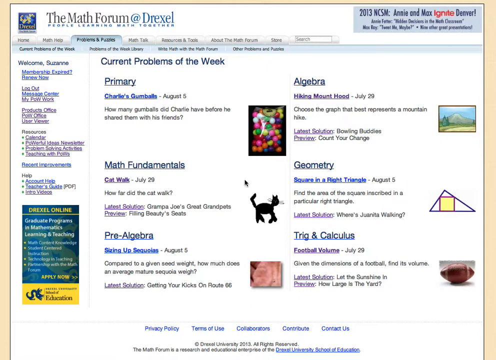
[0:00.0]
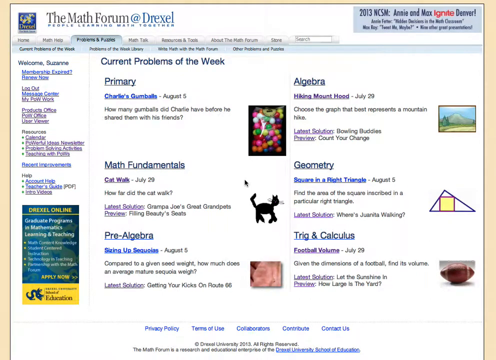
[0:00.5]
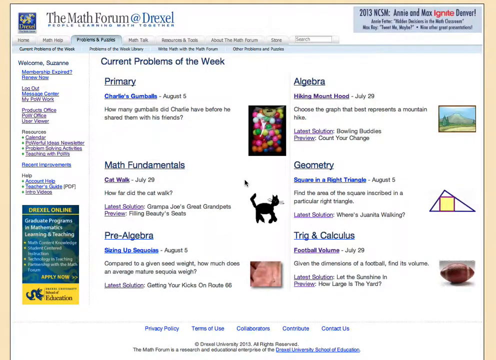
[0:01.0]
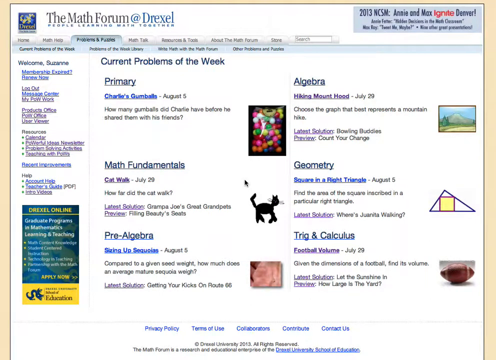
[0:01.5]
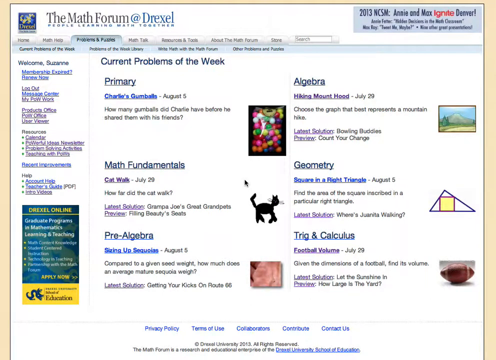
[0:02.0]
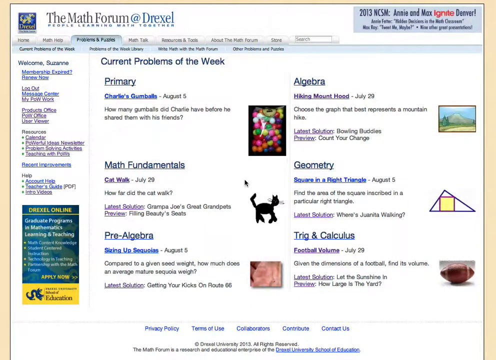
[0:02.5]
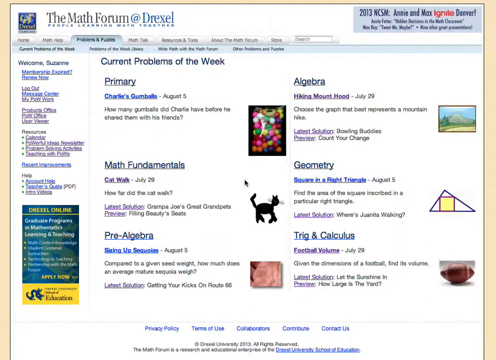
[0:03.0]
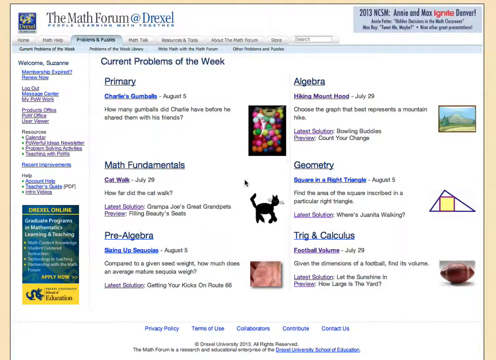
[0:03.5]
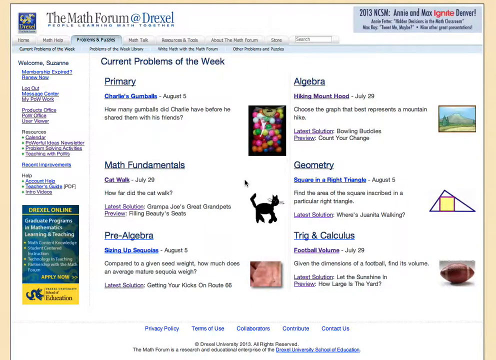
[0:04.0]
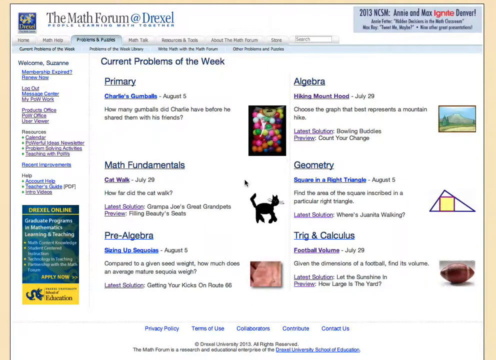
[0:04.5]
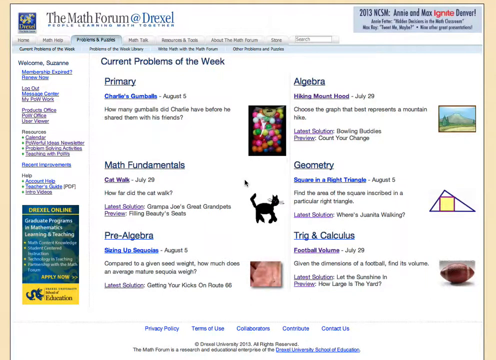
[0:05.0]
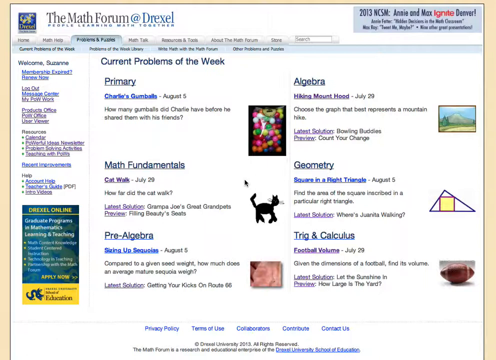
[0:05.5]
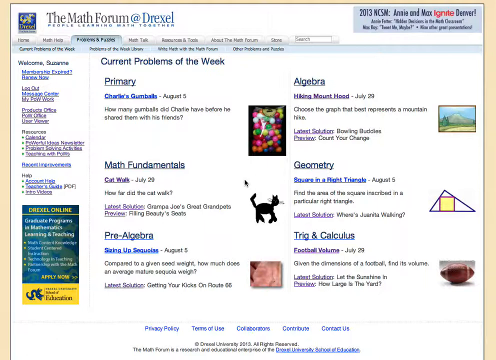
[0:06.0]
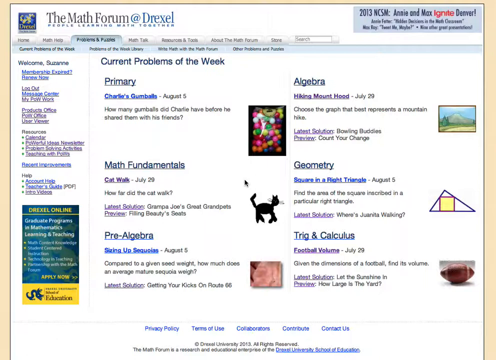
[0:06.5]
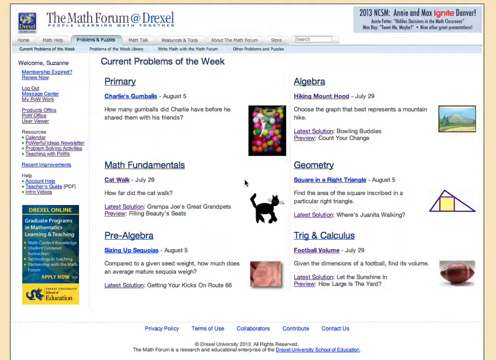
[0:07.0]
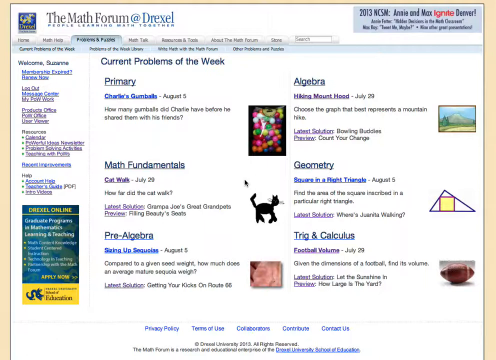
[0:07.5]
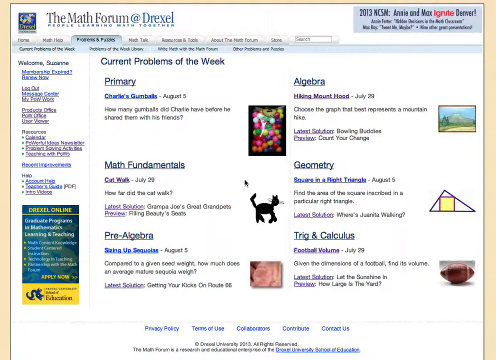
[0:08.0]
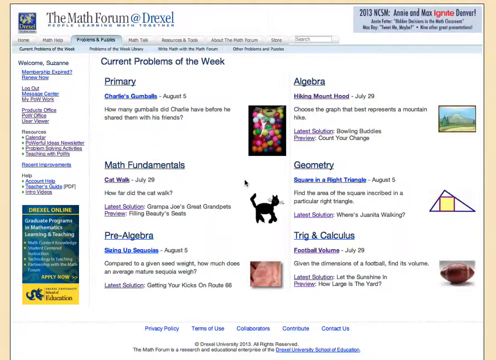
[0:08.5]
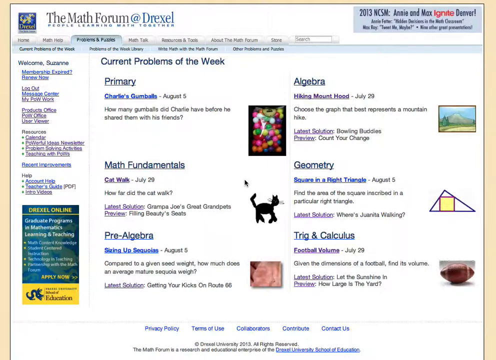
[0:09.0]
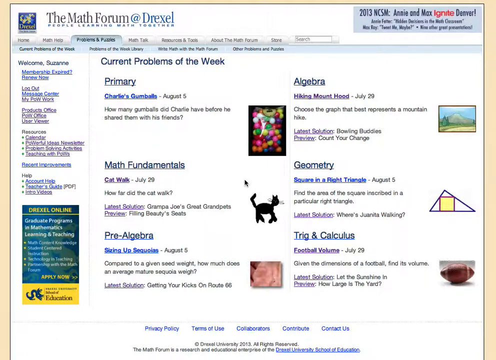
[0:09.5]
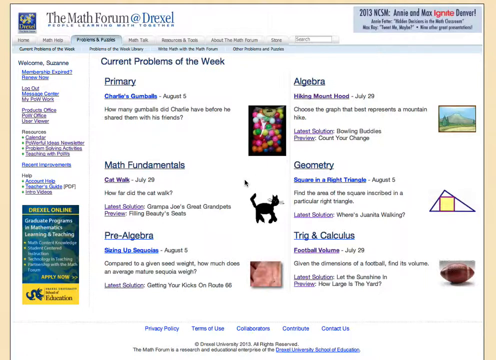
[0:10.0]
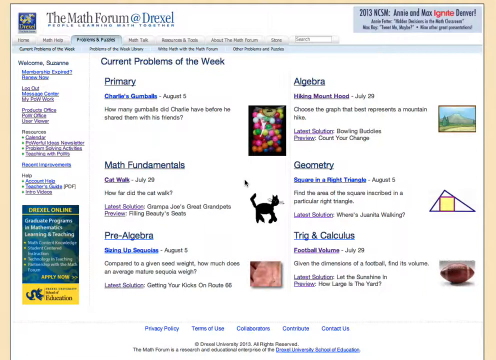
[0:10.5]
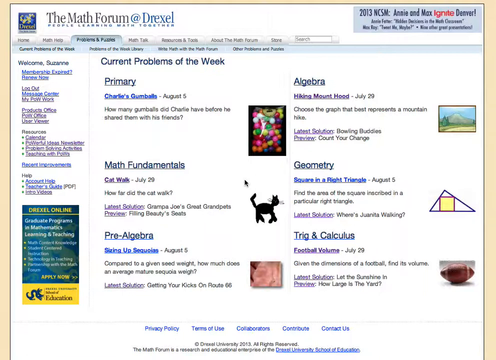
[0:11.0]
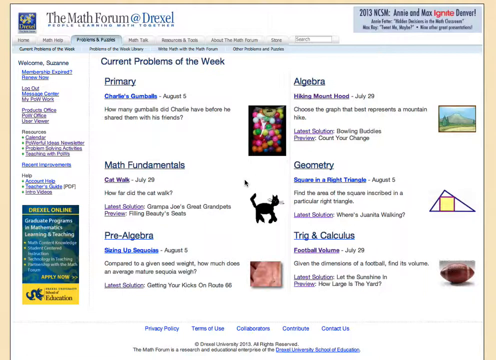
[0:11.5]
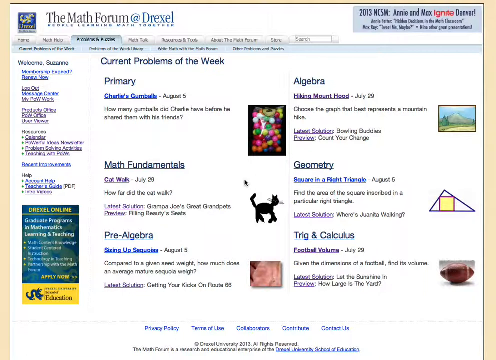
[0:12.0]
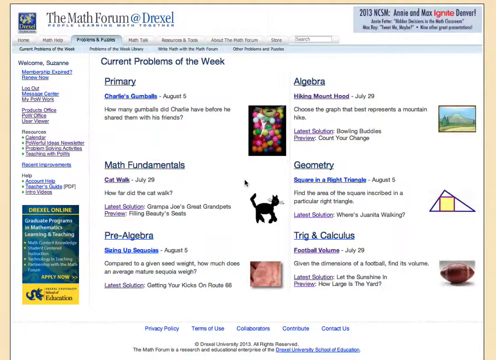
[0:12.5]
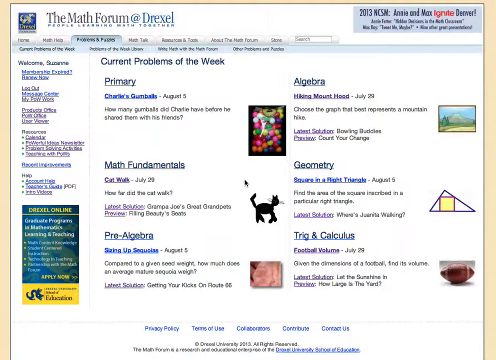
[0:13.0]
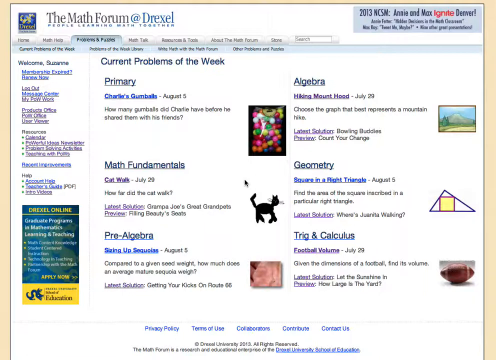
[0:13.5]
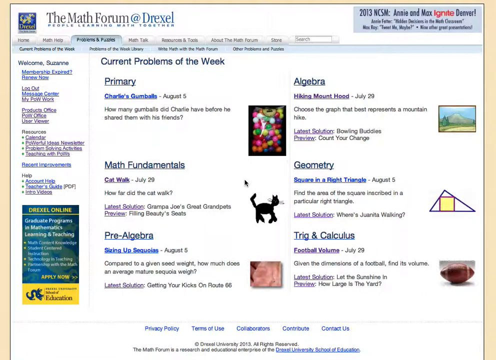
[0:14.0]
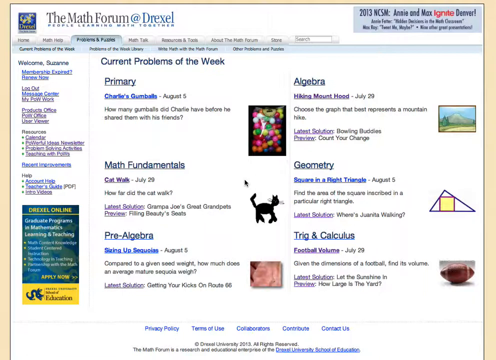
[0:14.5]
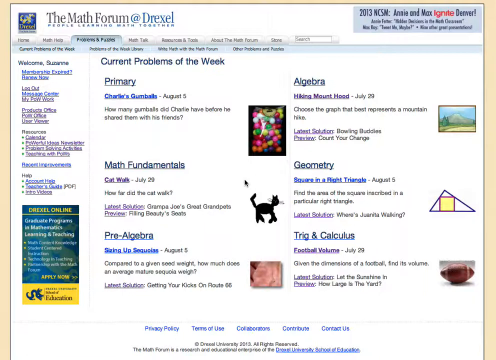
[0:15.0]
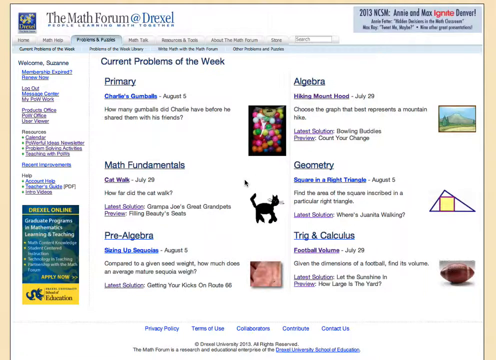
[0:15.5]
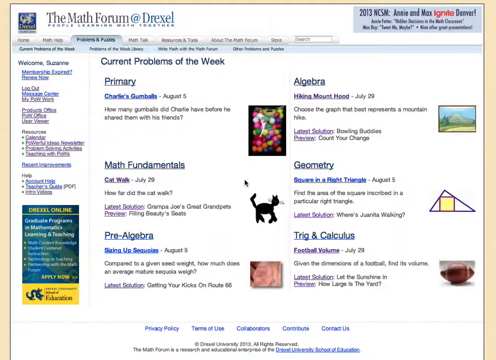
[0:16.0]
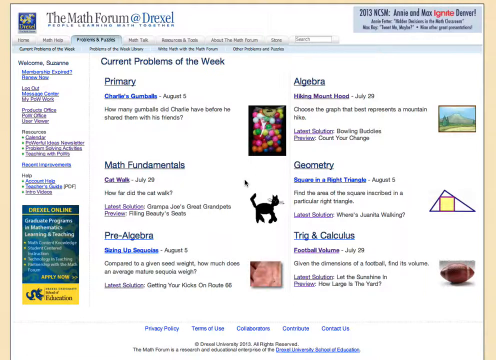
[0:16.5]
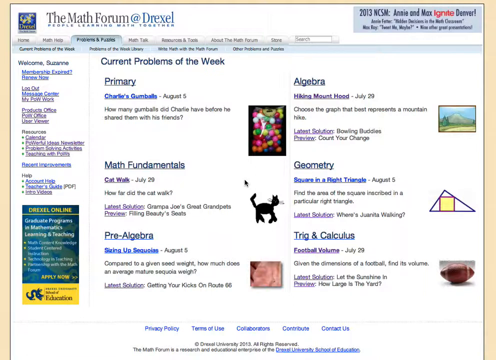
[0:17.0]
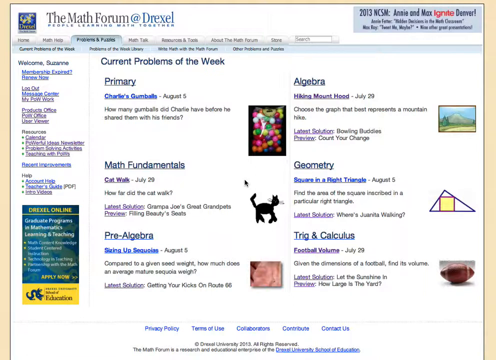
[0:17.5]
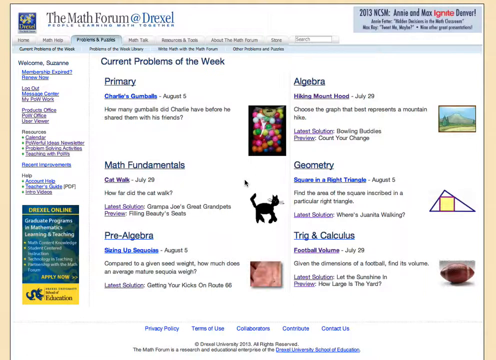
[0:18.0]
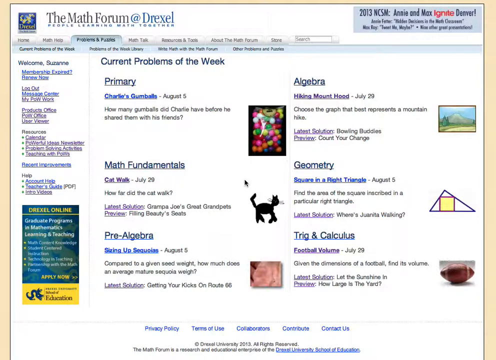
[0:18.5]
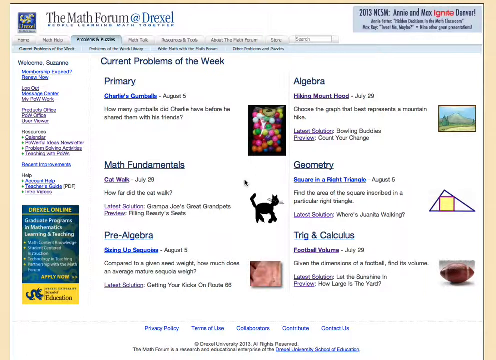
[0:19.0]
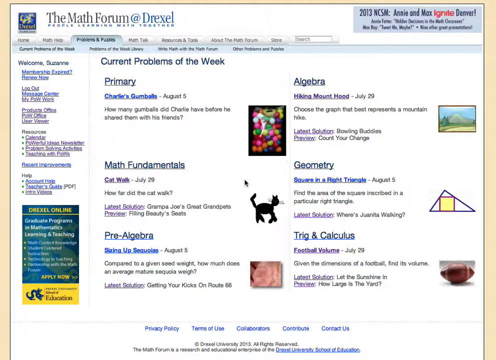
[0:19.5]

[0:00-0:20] The video opens on what appears to be a webpage. At the top left corner it says "the Math Forum at Drexel," and right below that wording, at the top of the screen, there is a tabbed menu. In the center of the page, from top to bottom, the readable words are "Current Problems of the Week," "Primary," "Algebra," "Math Fundamentals," "Geometry," "Pre-Algebra," "Trig," and "Calculus." An image of a football is in the bottom right corner of the screen. In the bottom left corner is a vertically aligned blue and green rectangle with the text "Drexel Online. Graduate Programs in Mathematics, Learning and Teaching." The resolution is not very good, so many words are somewhat blurry, but other readable lines say "How many gumballs did Charlie have before he shared them with his friends?", "How far did the cat walk", "How much does an average mature sequoia weigh?", "Choose the graph that best represents a mountain hike.", "Find the area of the square inscribed in the particular right triangle." and "Given the dimensions of a football, find its volume."